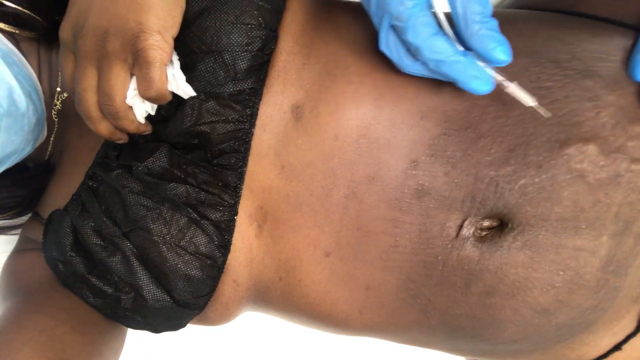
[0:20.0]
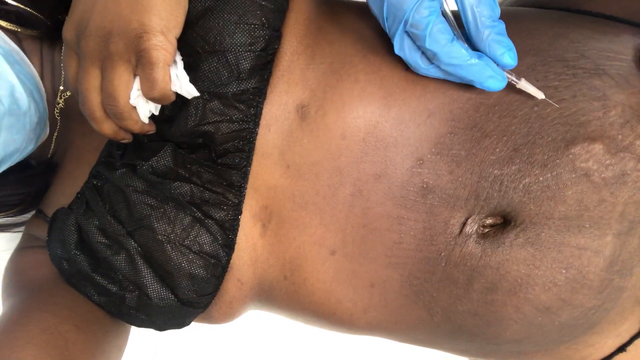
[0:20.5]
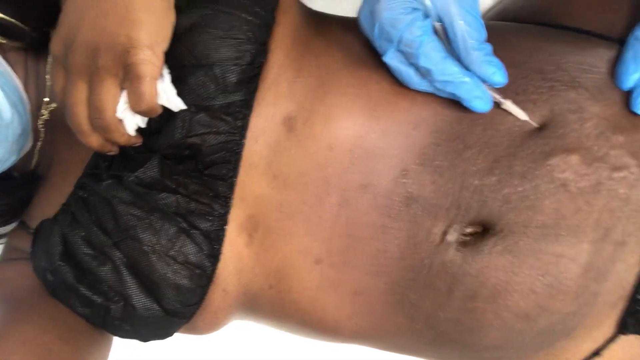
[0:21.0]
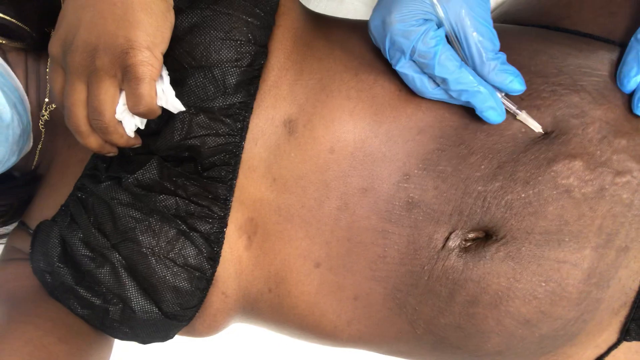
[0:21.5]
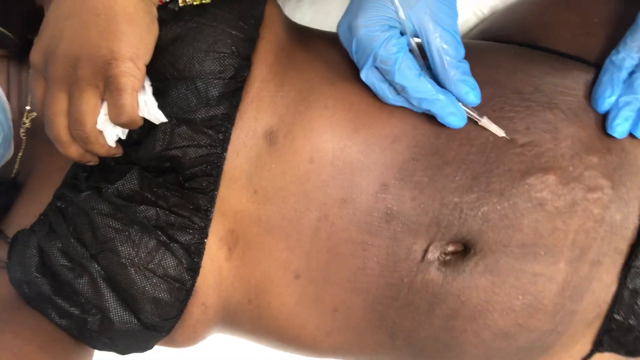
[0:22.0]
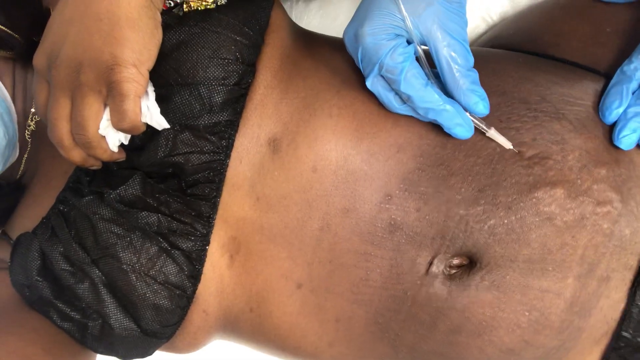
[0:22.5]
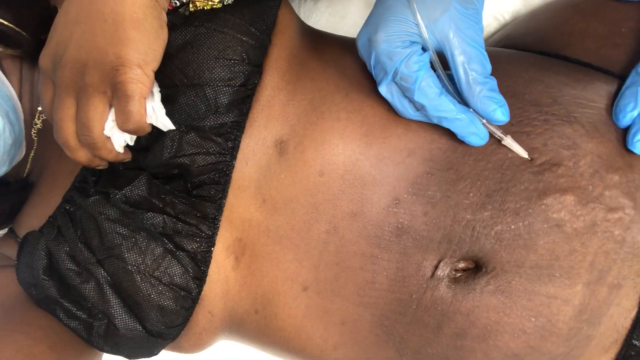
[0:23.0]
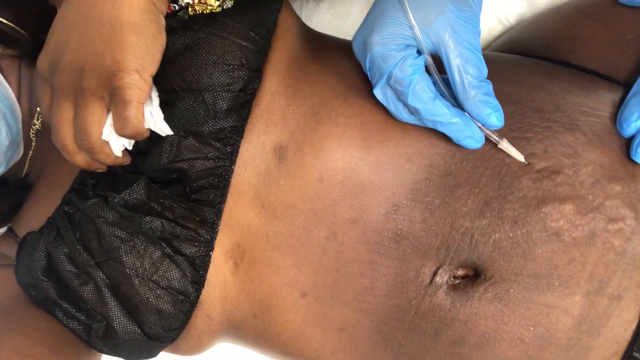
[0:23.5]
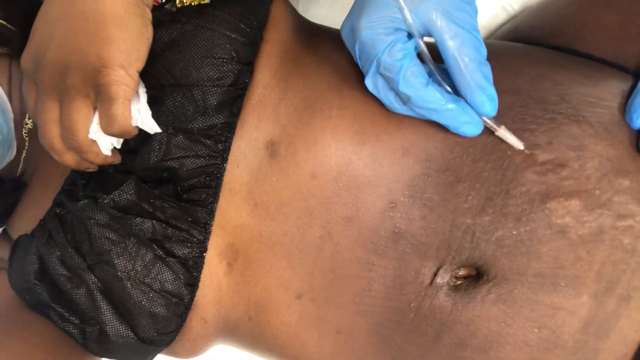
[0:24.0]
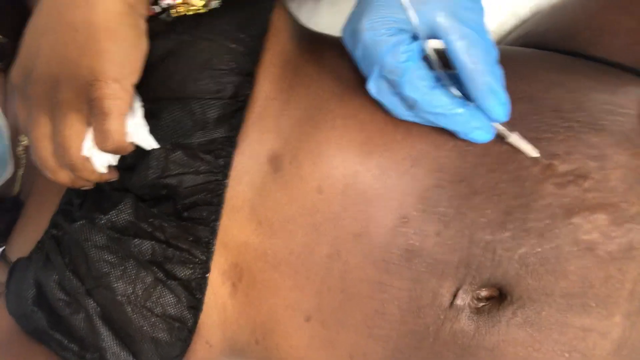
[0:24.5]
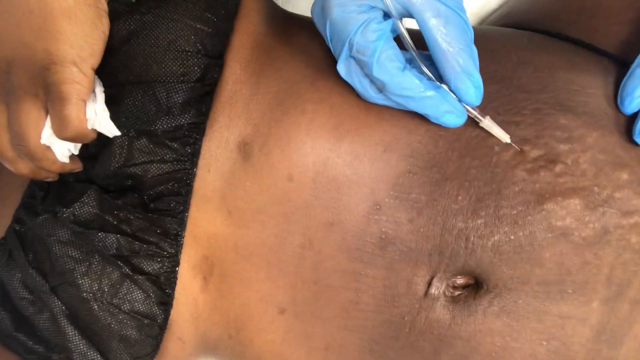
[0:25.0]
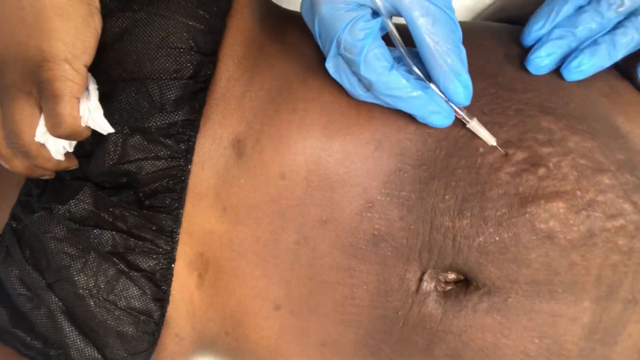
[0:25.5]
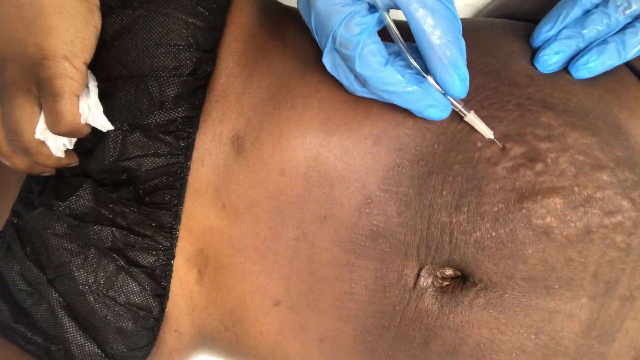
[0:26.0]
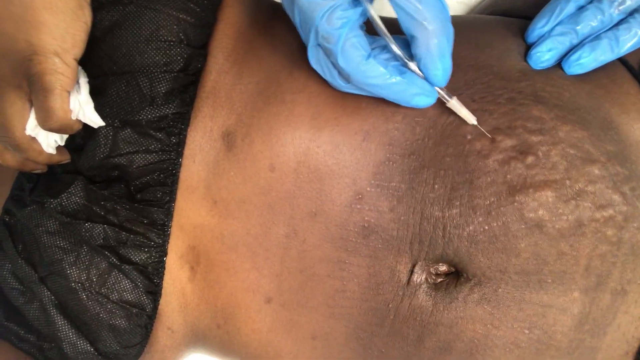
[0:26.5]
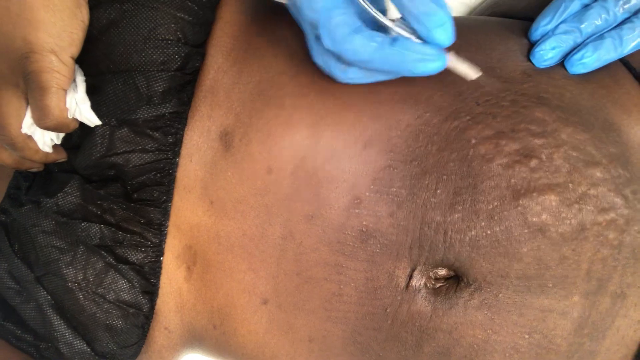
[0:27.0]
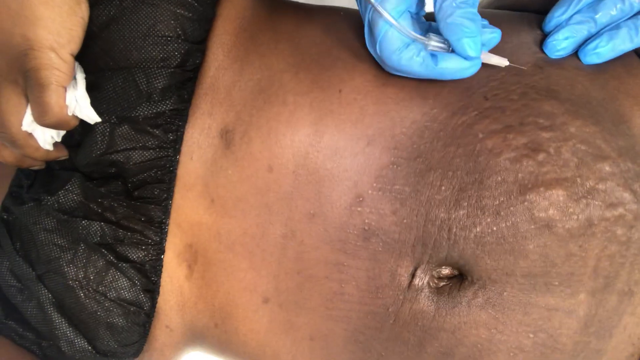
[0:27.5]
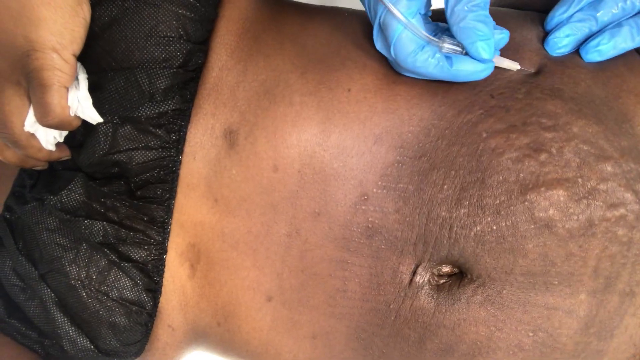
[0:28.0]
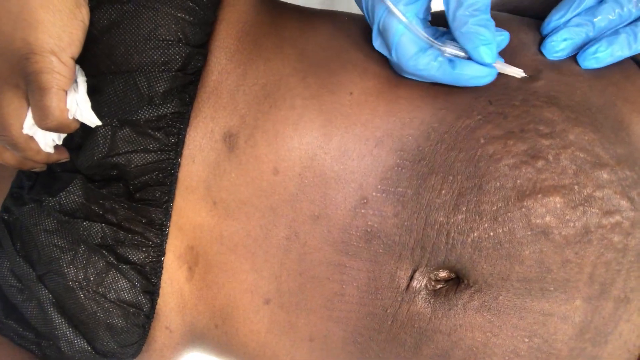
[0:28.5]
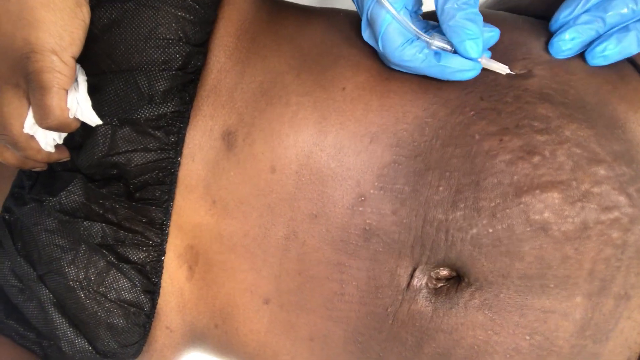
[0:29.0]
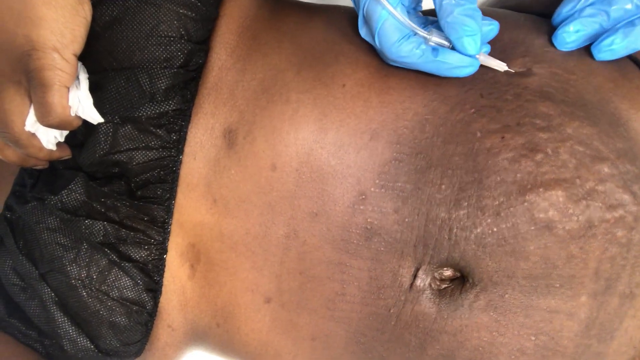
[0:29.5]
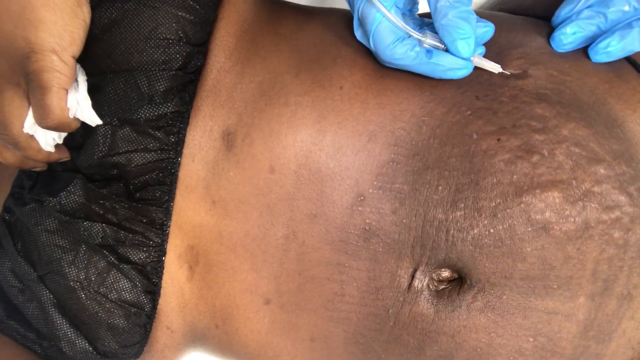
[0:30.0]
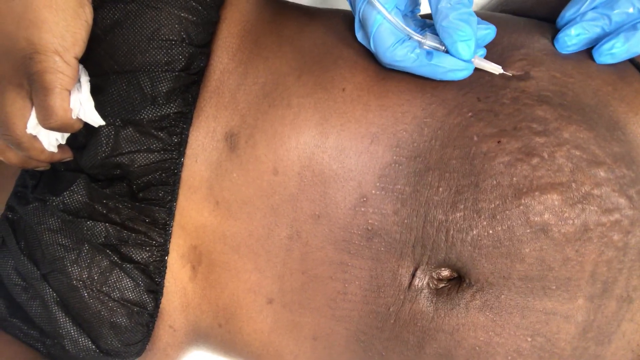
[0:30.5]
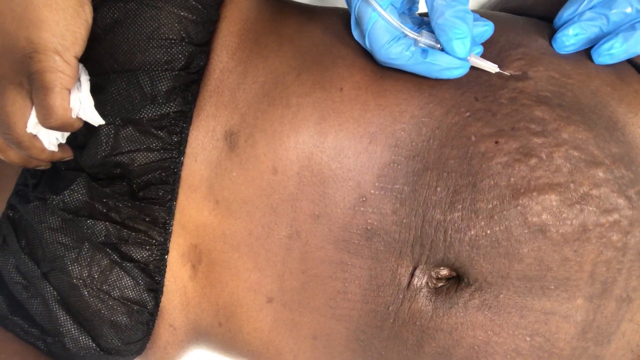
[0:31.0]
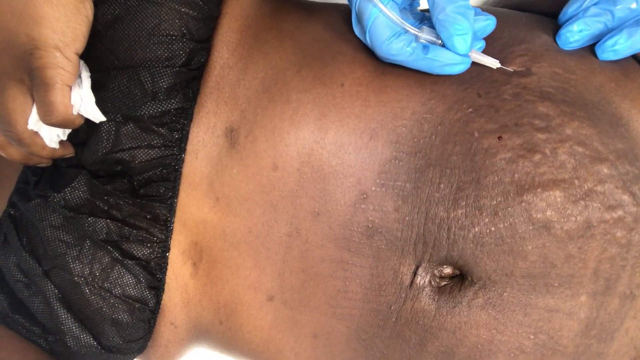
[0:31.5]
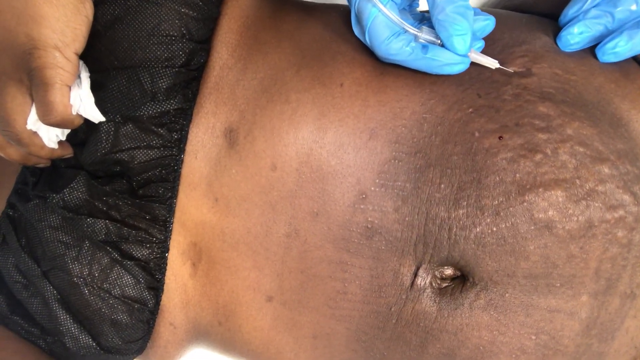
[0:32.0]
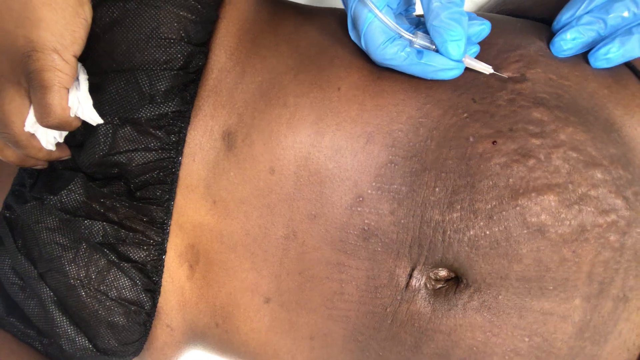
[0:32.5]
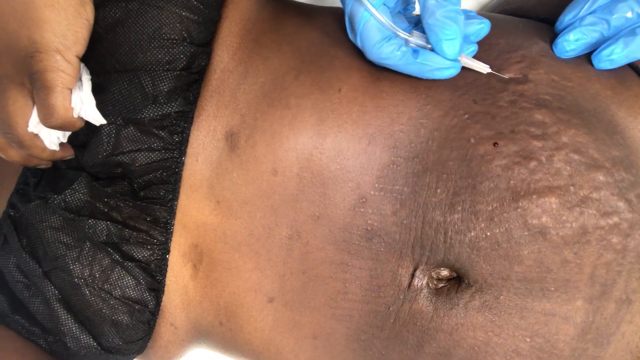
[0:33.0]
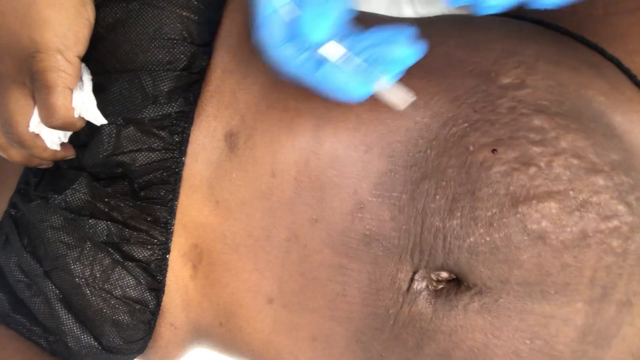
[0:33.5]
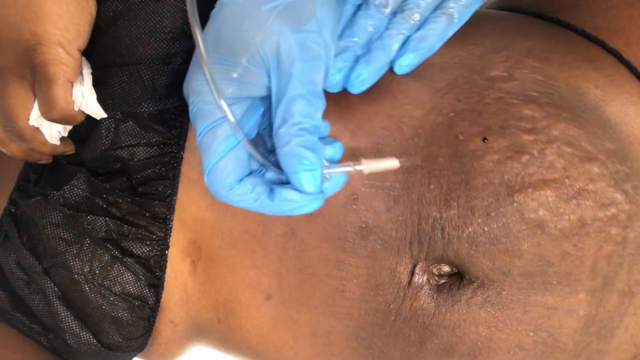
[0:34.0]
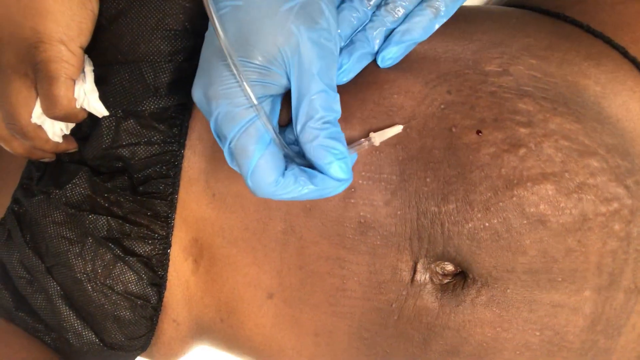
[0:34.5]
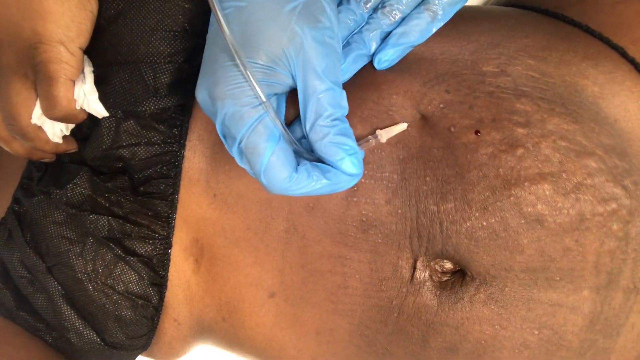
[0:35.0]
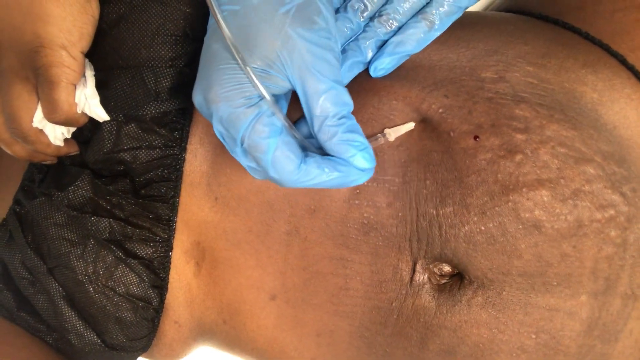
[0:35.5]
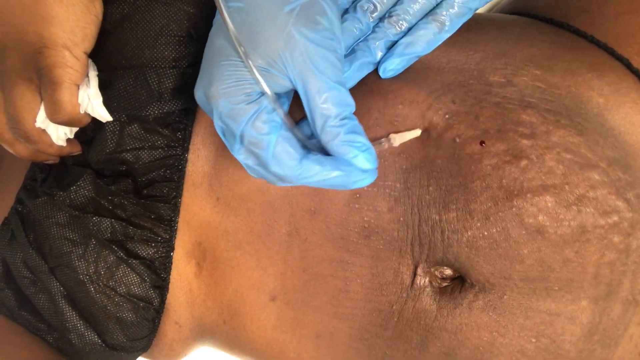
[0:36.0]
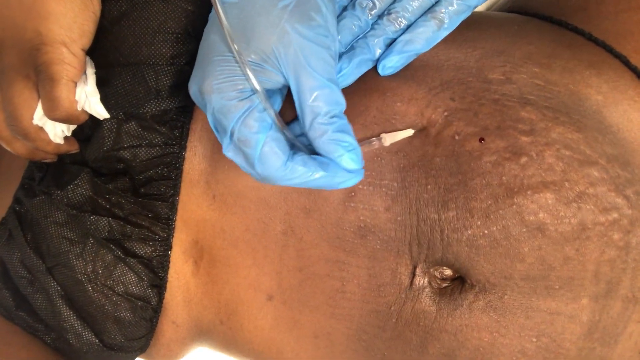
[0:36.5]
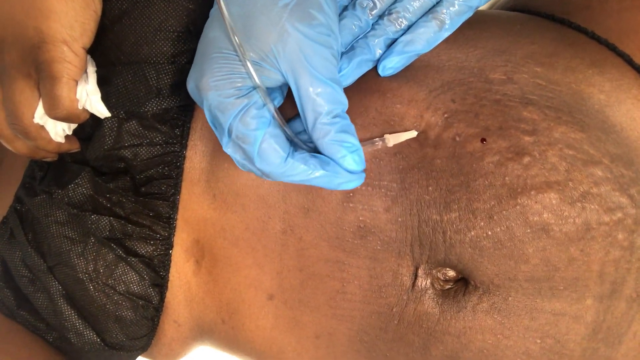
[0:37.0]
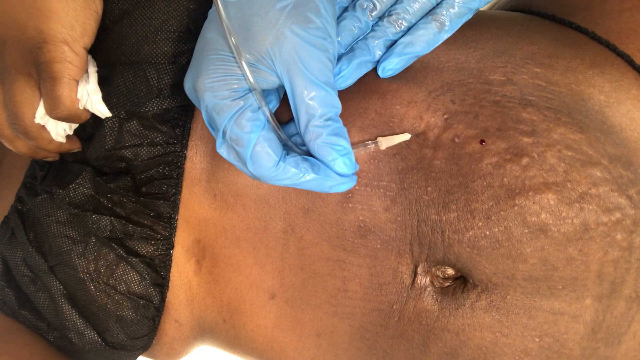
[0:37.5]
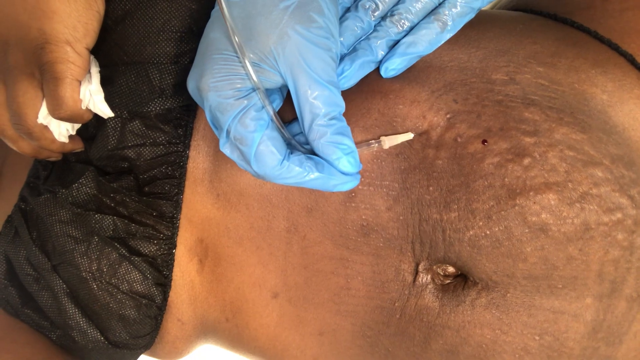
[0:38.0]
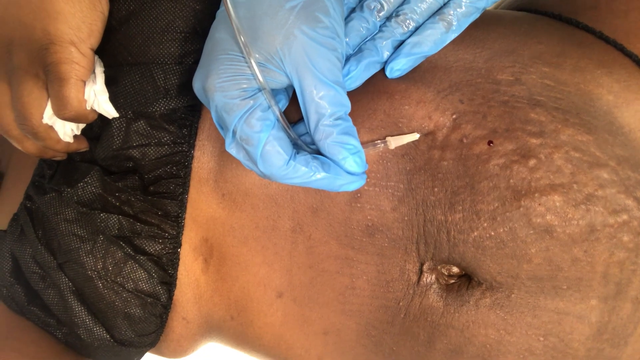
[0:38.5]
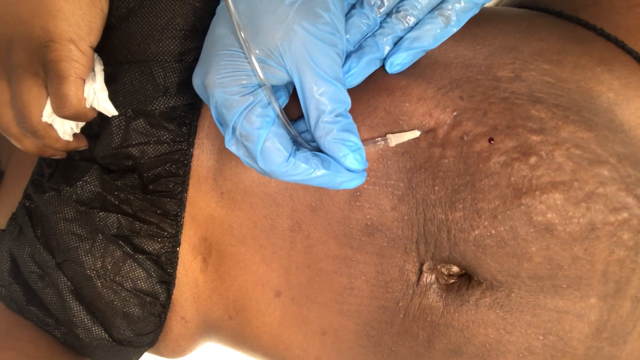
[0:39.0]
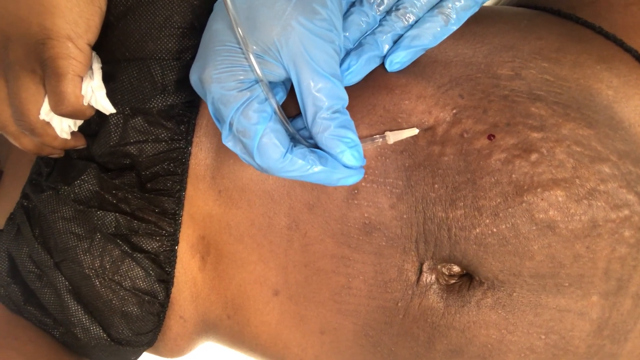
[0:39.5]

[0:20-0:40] Some sort of medical procedure is performed on a brown-skinned woman wearing a black bra and black thong made of material that appears to be part of a patient gown or surgery outfit. Someone holds a tissue to her chest area while another person performs some sort of needle-based procedure on her abdomen. A few raised areas of inflamed tissue appear to be where the patient has previously been poked with the needle. As the needle goes in, it seems that something is either inserted or extracted through the attached tube; it is unclear which. The doctor keeps grabbing at different parts of skin, stretching areas of the stomach, and inserting the needle in various places to the left of the woman's belly button, jiggling the needle back and forth each time.